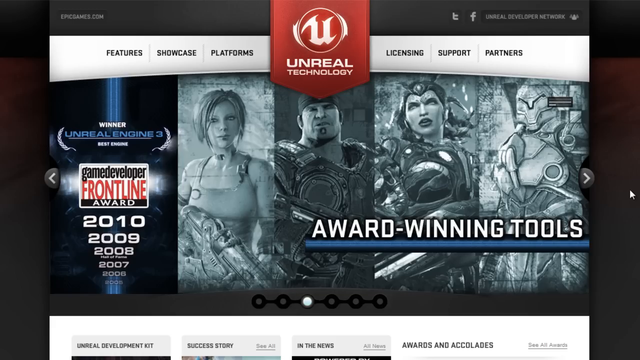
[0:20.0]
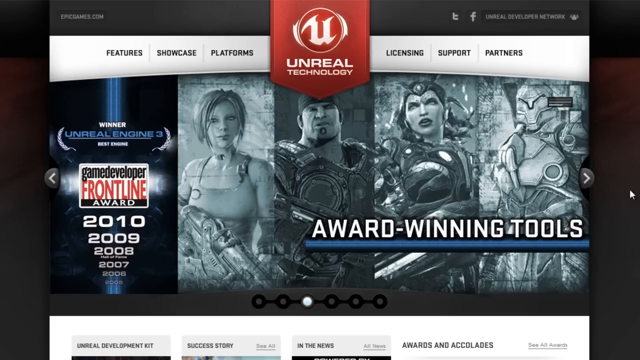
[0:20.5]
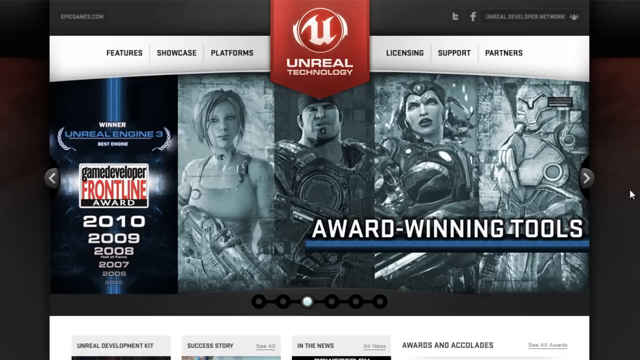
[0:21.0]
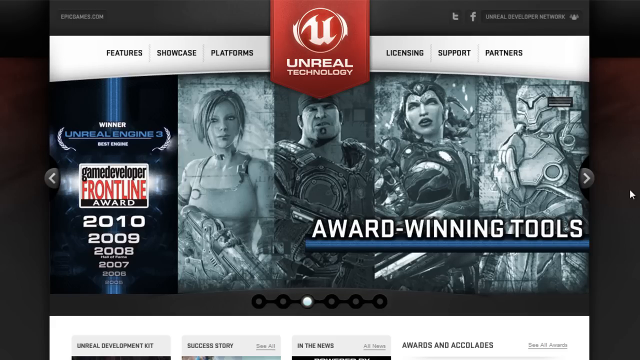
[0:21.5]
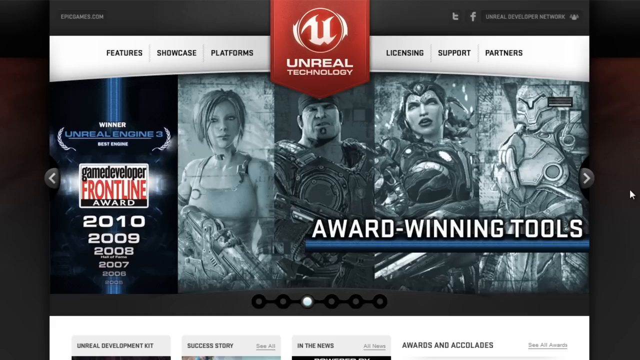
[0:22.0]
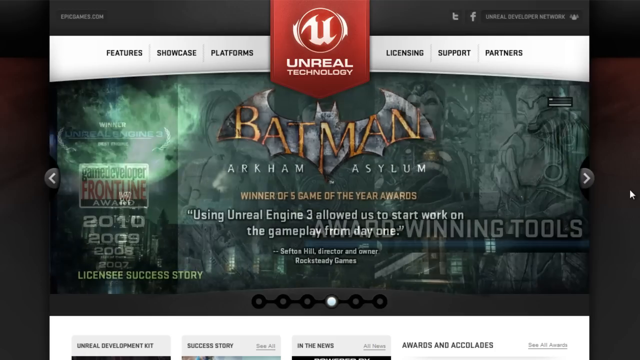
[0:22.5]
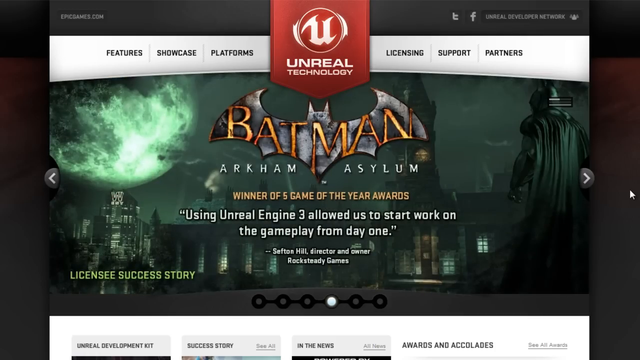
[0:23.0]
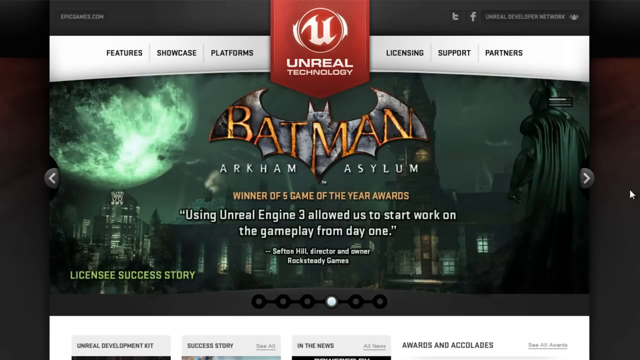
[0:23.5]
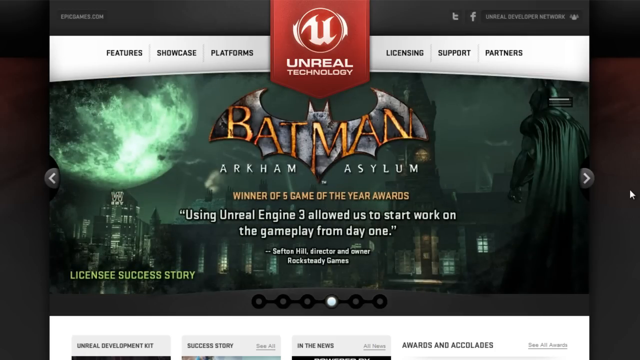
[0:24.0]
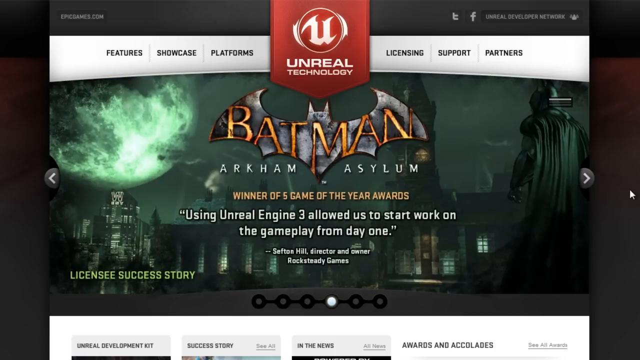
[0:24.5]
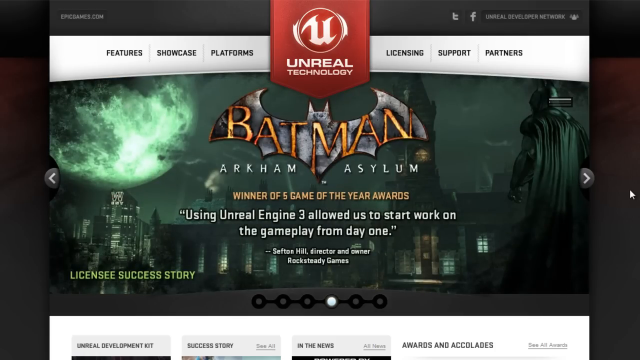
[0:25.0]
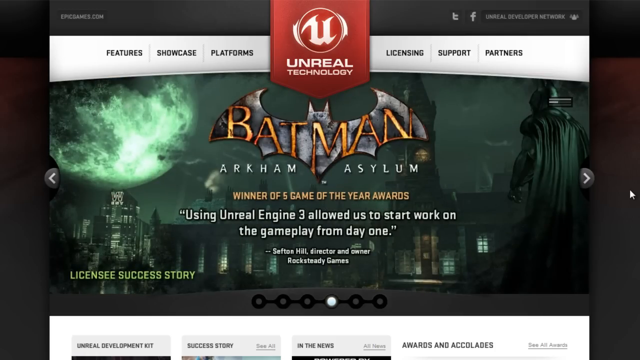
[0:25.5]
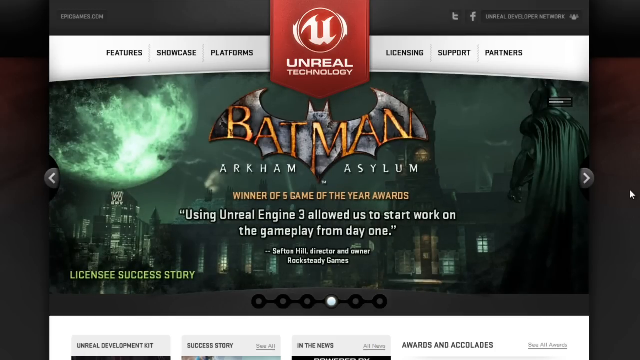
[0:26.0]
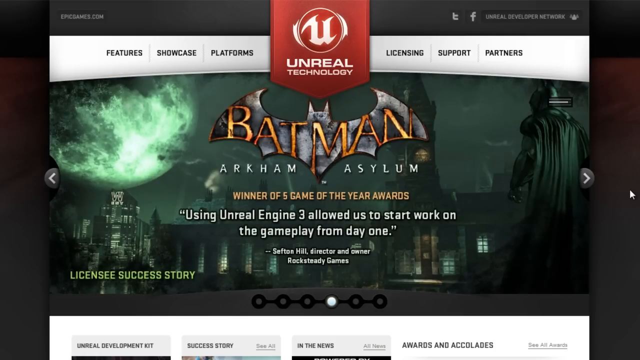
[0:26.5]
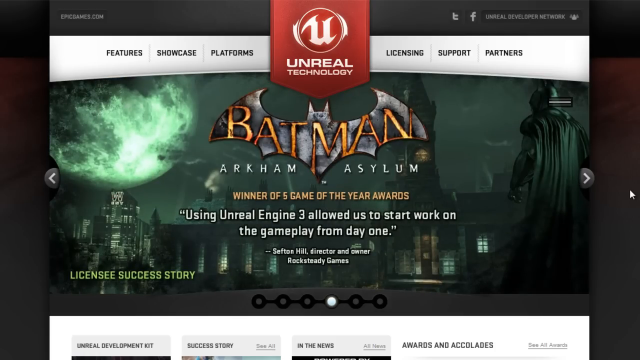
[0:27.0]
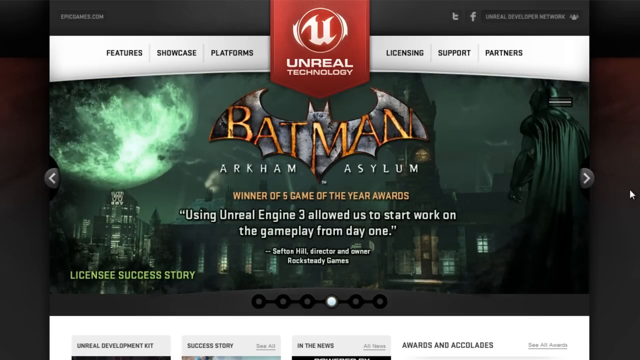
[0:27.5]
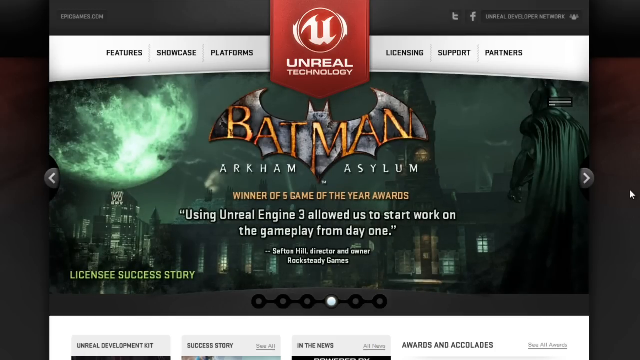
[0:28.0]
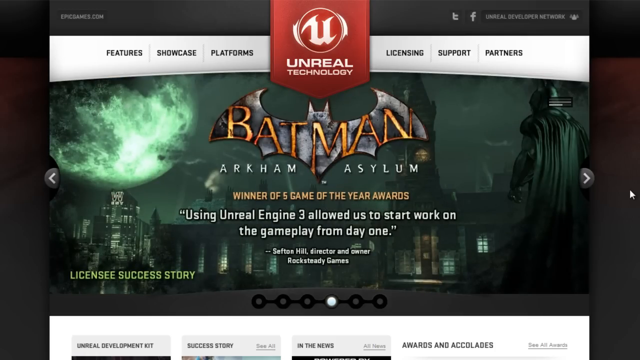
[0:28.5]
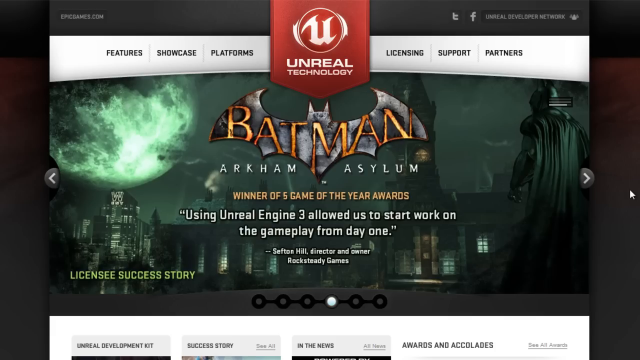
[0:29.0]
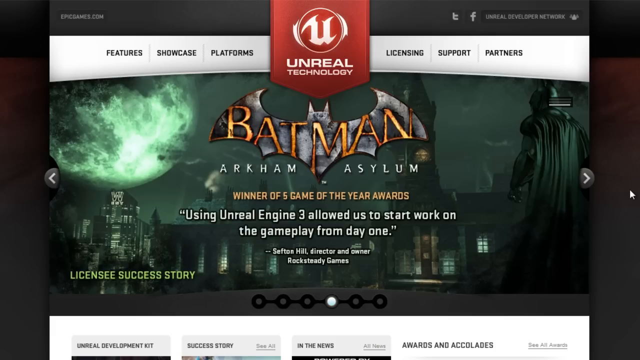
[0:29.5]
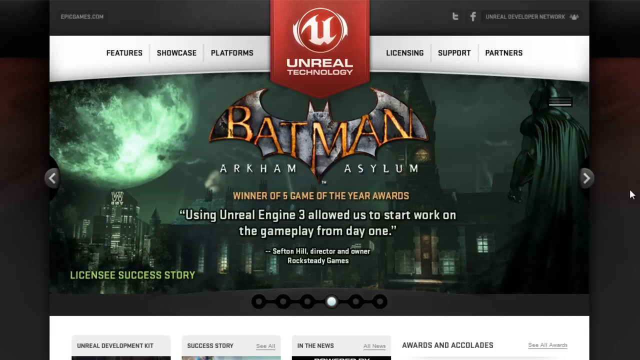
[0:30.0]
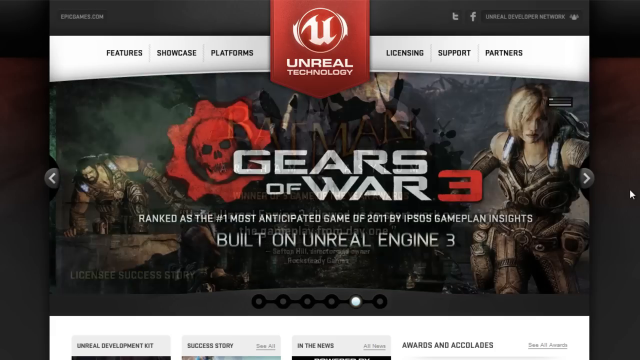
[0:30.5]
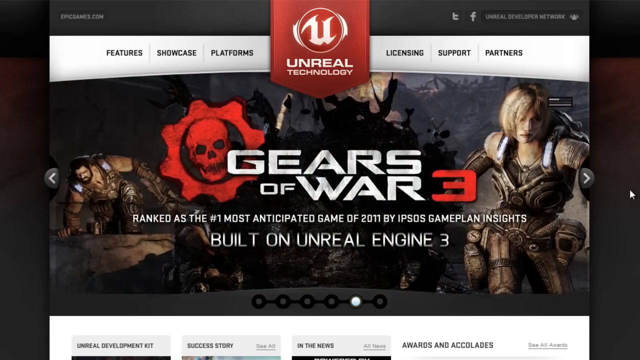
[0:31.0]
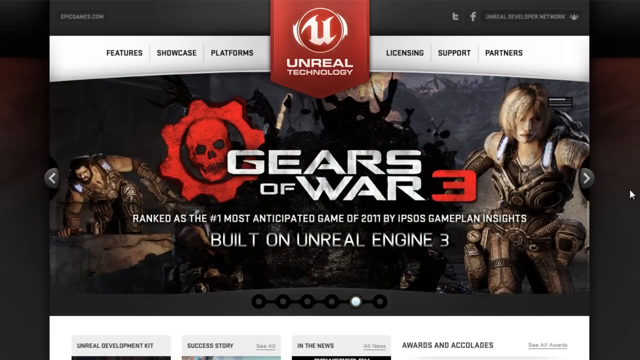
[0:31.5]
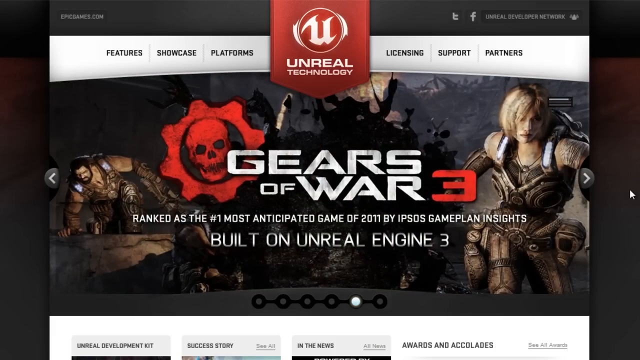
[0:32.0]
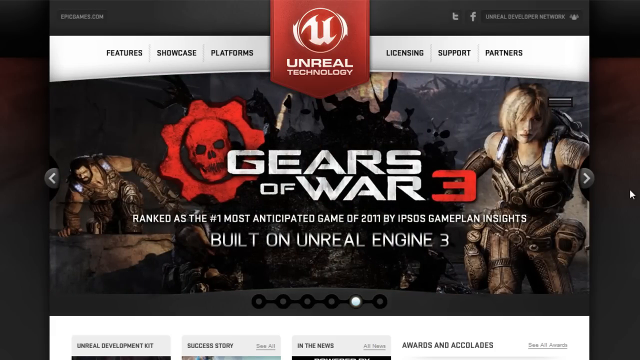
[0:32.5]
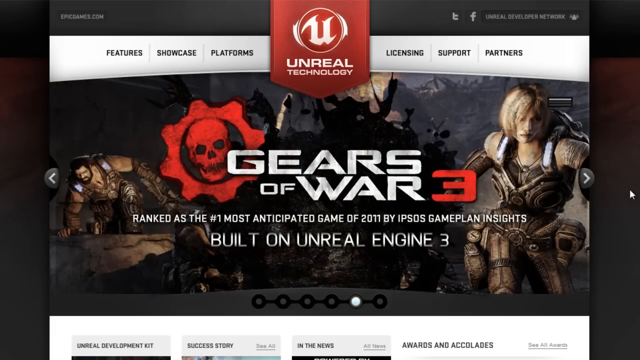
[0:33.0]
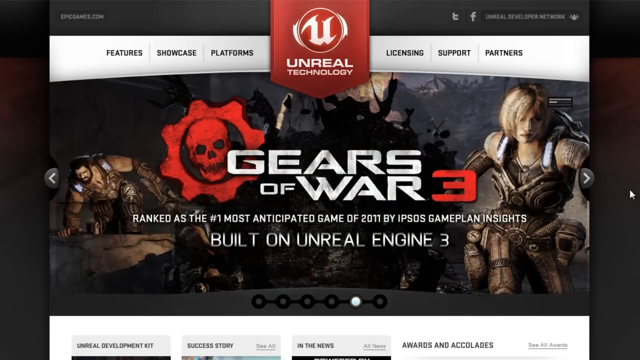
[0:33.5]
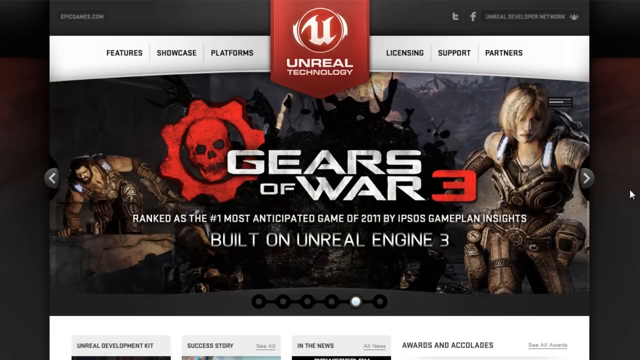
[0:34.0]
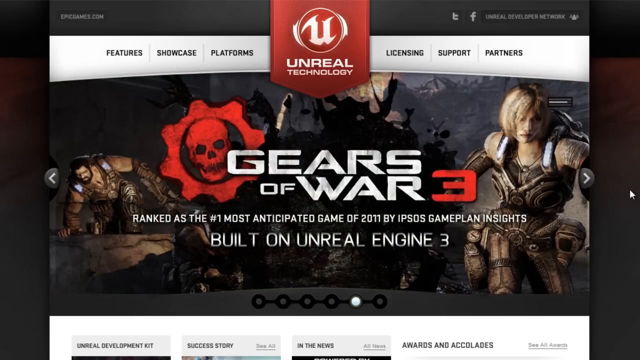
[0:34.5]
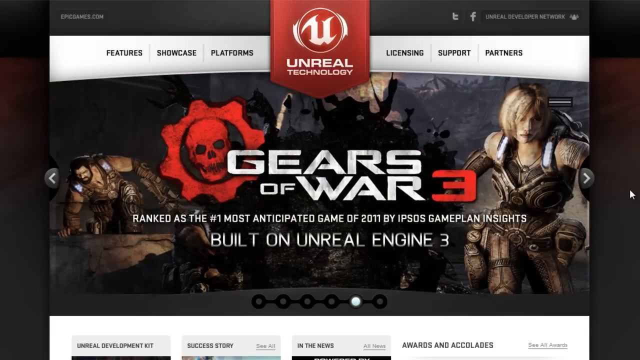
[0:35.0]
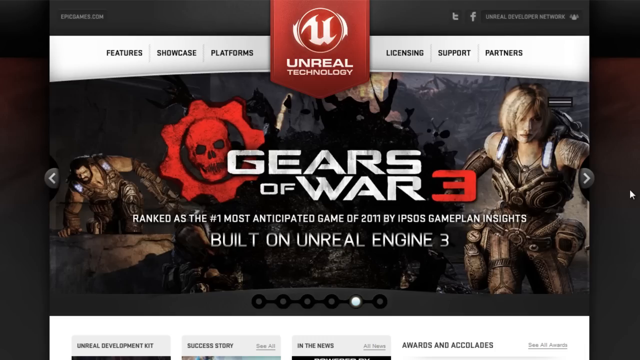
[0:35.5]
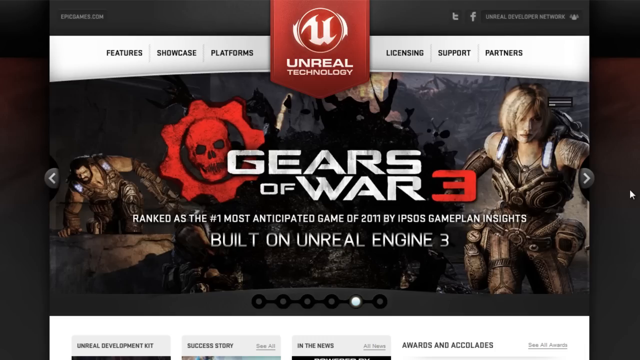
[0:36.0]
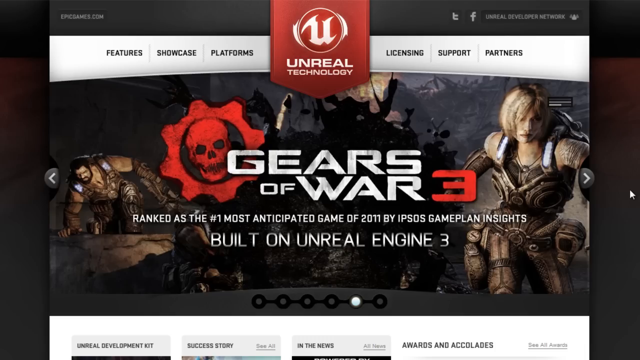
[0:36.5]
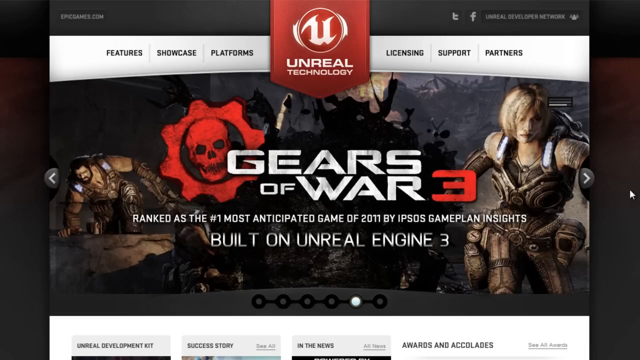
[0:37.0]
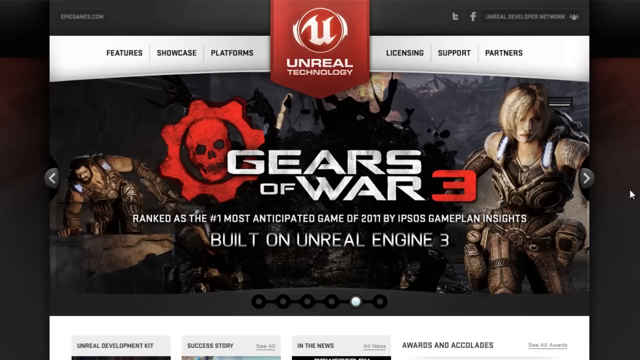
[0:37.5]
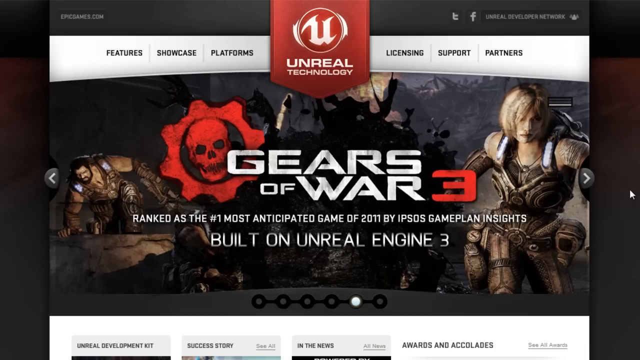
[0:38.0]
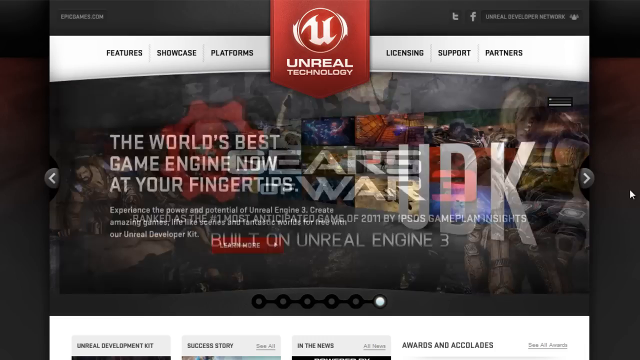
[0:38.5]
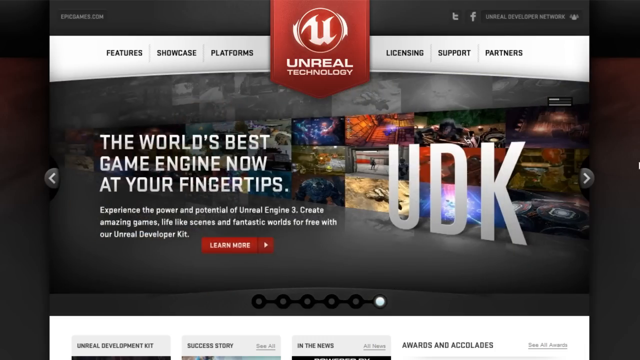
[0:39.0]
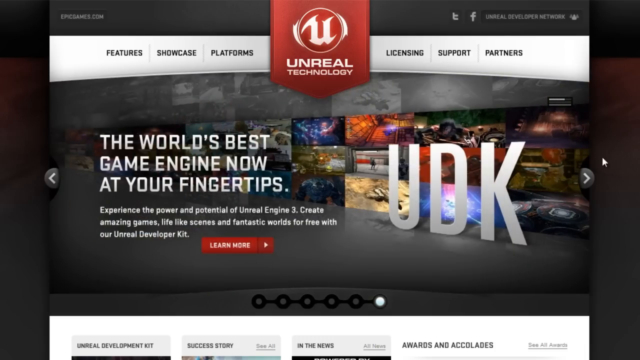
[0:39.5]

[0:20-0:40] The award-winning tools slide has four images side by side of different characters from the game. On the left-hand side it says "winner of Unreal Engine 3 for best engine" and names the awards, the game developer frontline awards, with the years it has won running from 2010 down to 2005, the 2005 in much smaller writing at the bottom. The fourth slide is for Batman: in the top center is the bat logo with "Batman" written in orange inside it, and underneath in orange it says "winner of five game of the year awards". White text reads "using Unreal Engine 3 allowed us to start work on the gameplay from day one", attributed in small text underneath to Sefton Hill, director and owner of Rocksteady Games. The page then scrolls to the fifth slide, for Gears of War 3, with gameplay pictures in the background: a woman on the left, a skull with a red cog around it on the left-hand side, and a man climbing over something. Underneath, white text says "ranked as the number one most anticipated game 2011 by Ipsos Game Plan Insights".